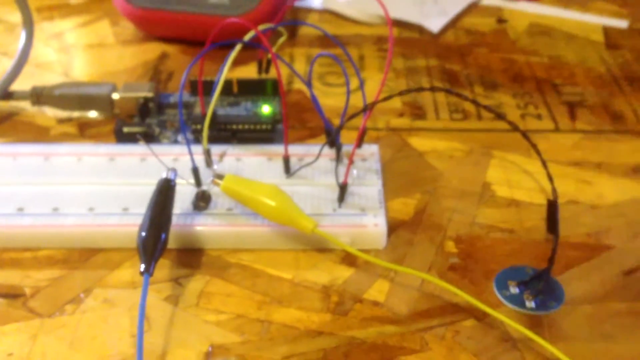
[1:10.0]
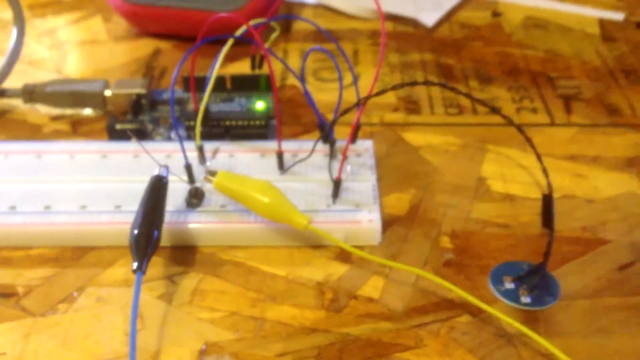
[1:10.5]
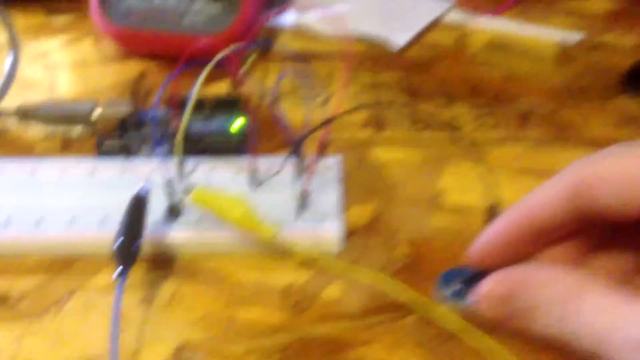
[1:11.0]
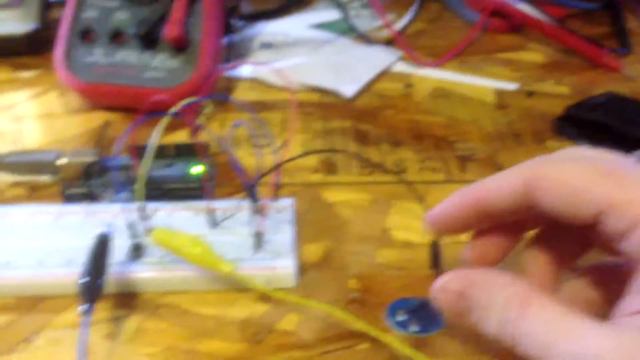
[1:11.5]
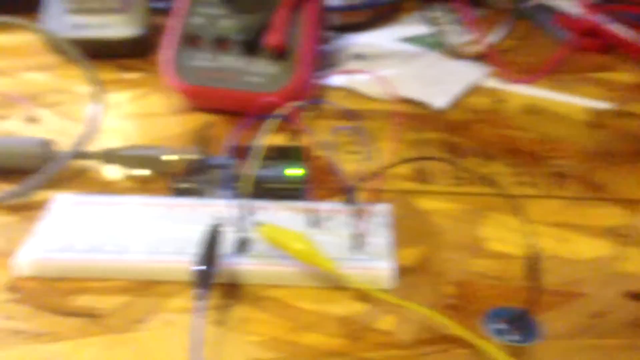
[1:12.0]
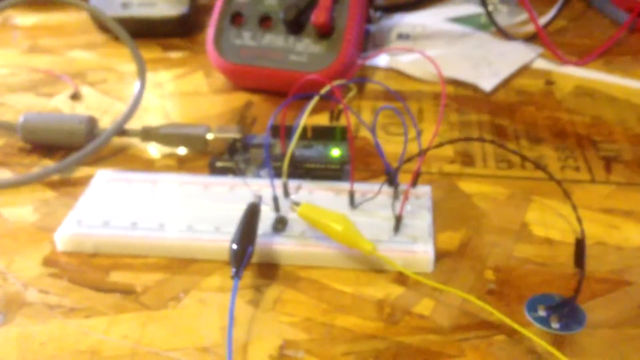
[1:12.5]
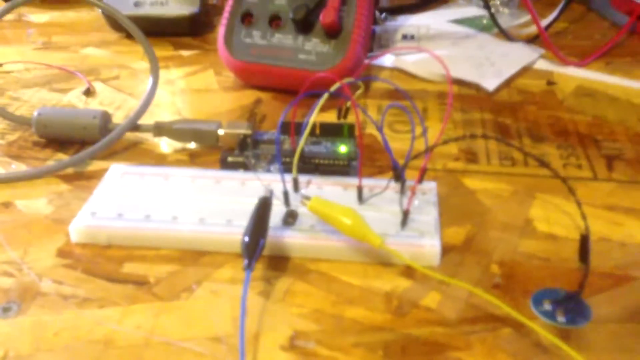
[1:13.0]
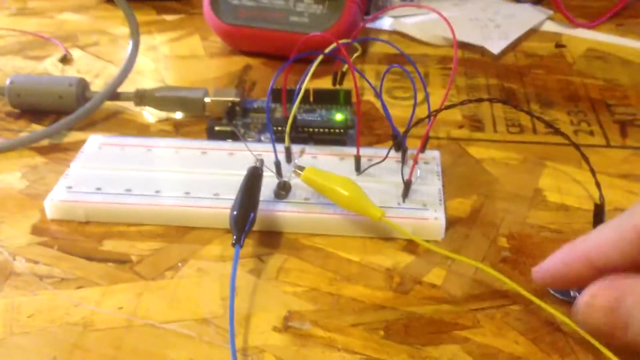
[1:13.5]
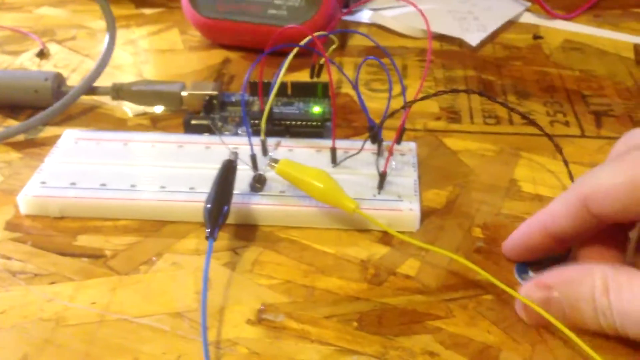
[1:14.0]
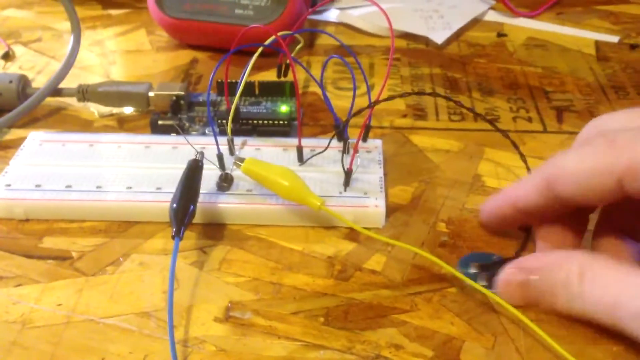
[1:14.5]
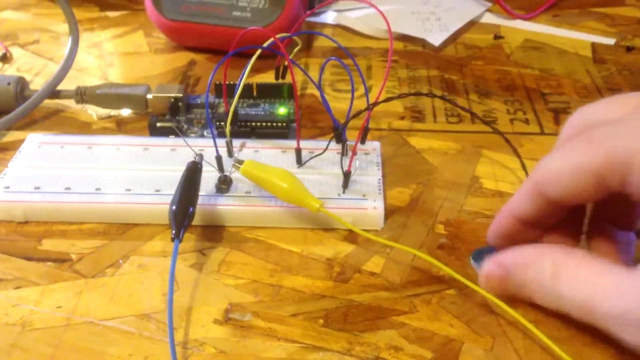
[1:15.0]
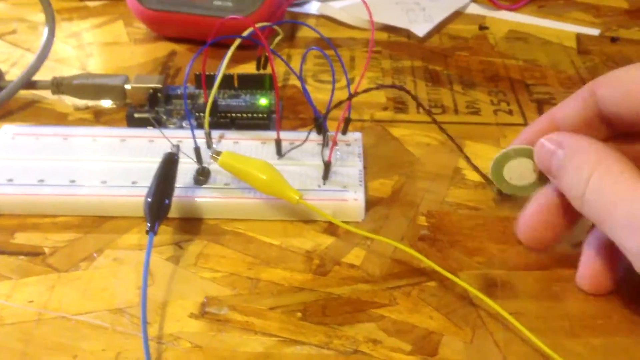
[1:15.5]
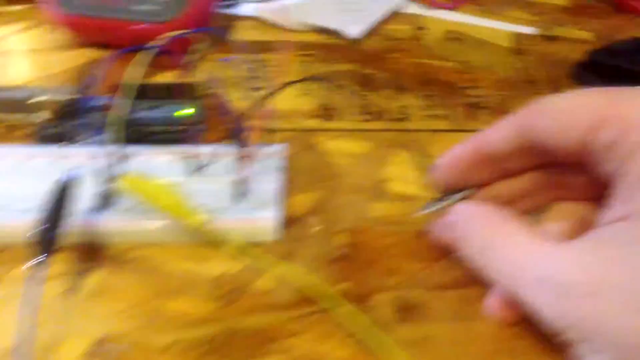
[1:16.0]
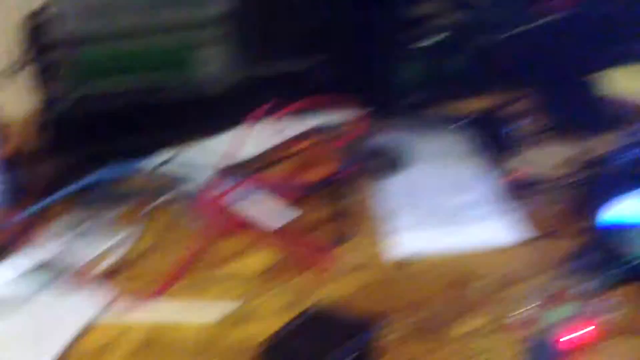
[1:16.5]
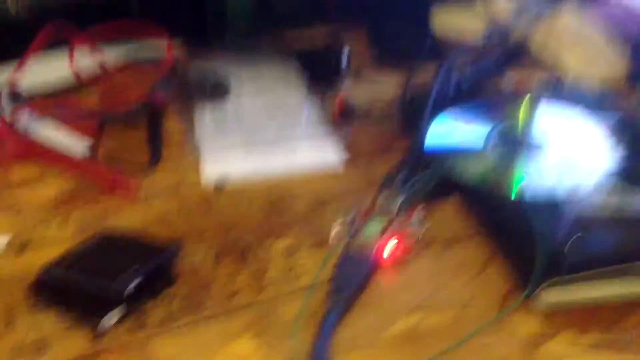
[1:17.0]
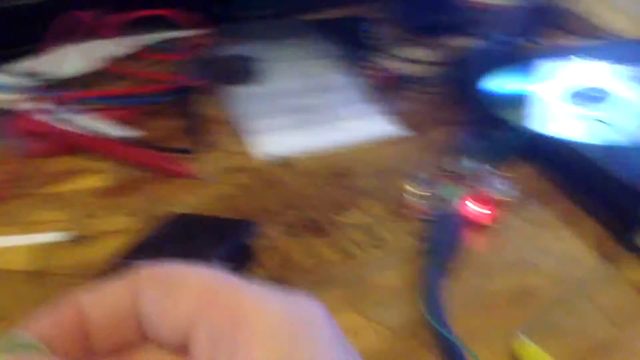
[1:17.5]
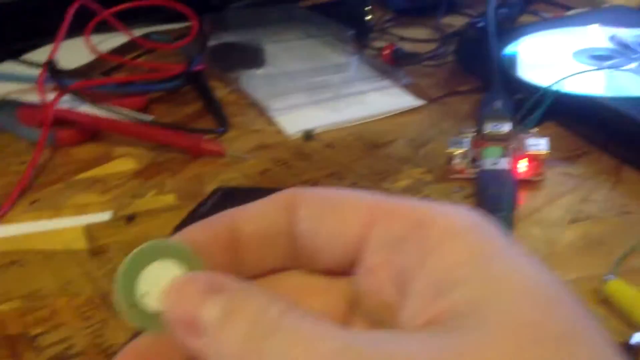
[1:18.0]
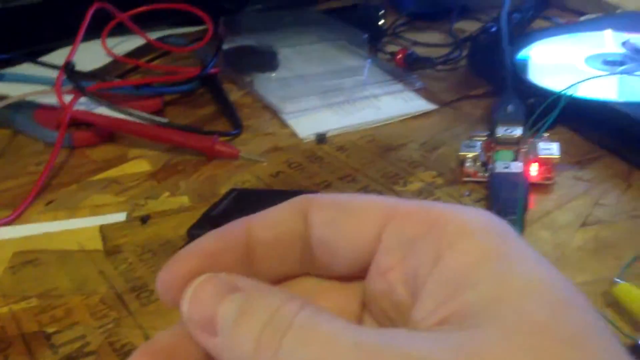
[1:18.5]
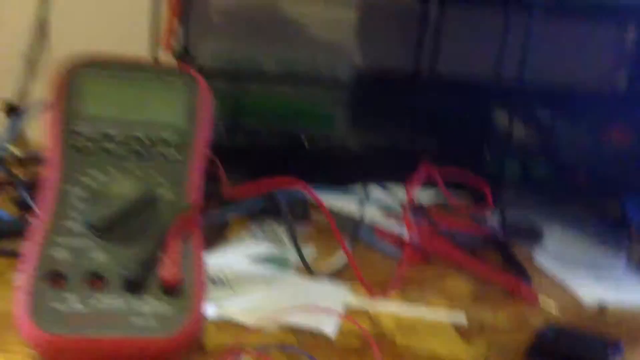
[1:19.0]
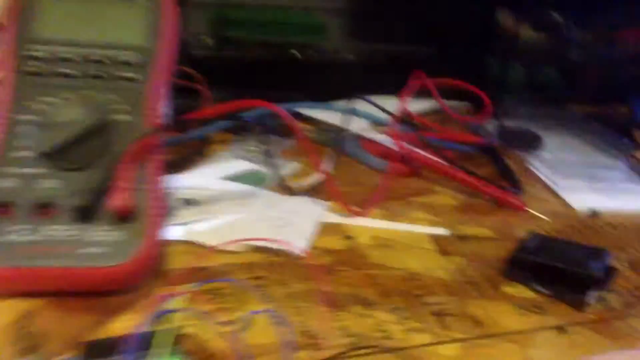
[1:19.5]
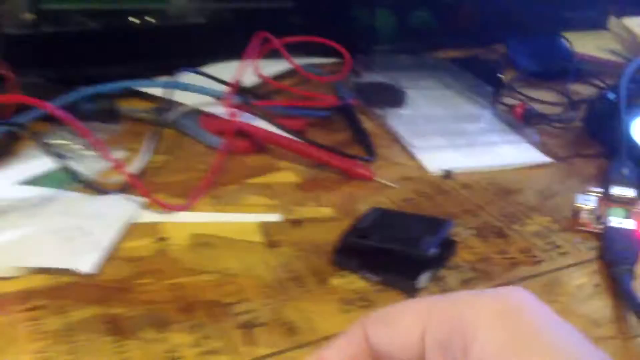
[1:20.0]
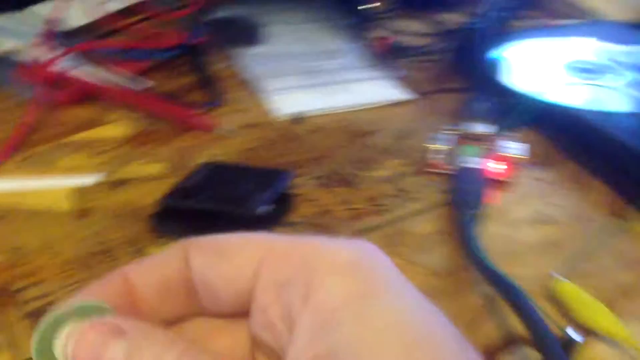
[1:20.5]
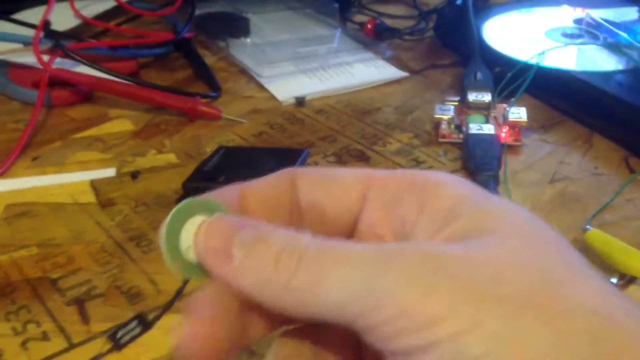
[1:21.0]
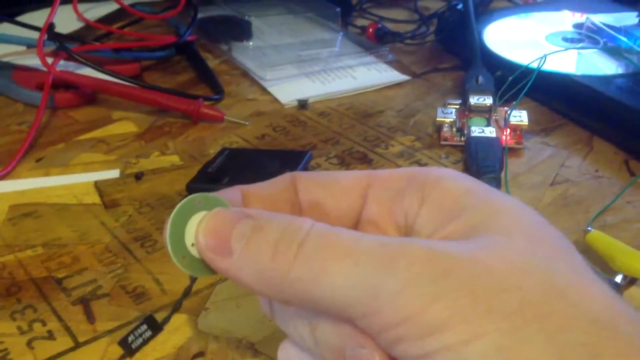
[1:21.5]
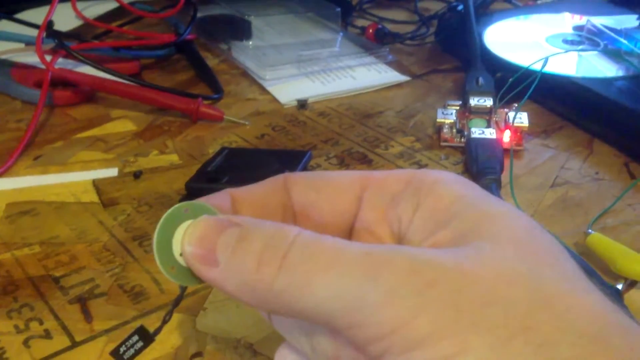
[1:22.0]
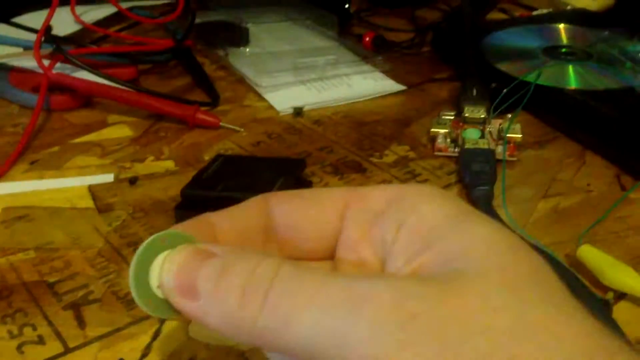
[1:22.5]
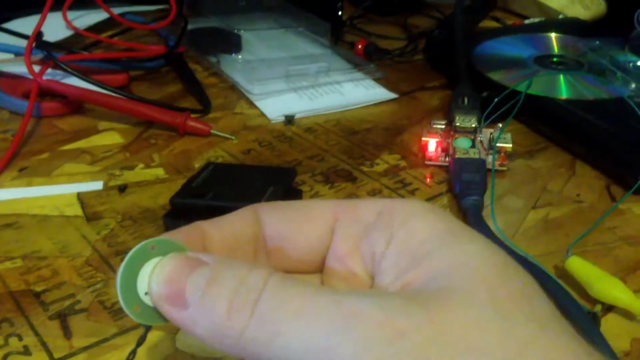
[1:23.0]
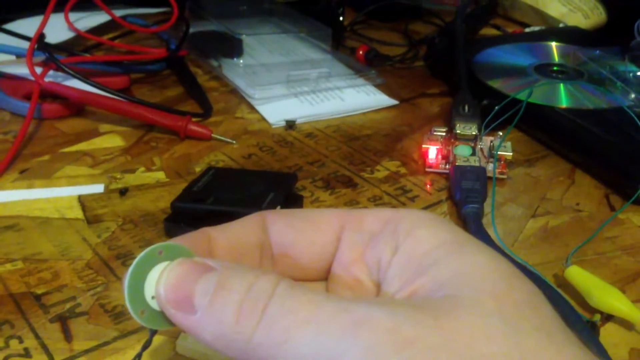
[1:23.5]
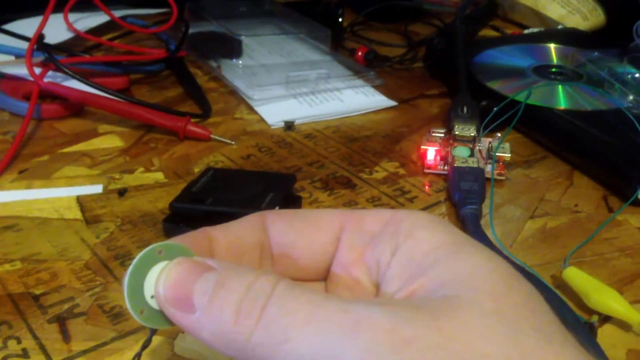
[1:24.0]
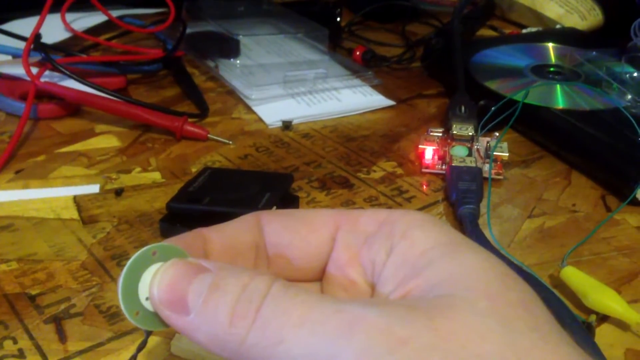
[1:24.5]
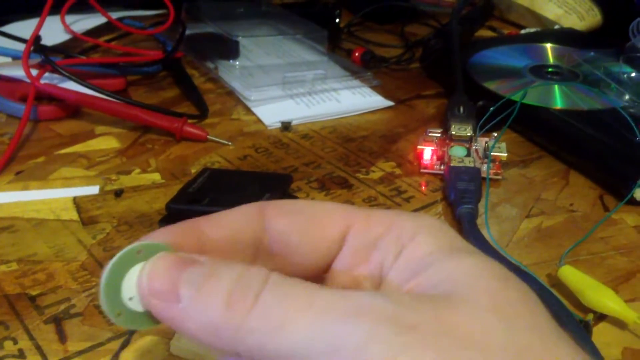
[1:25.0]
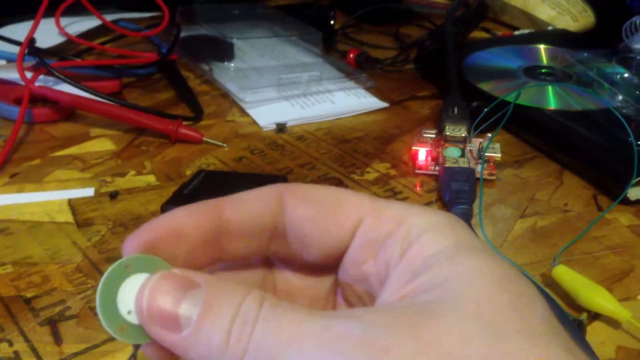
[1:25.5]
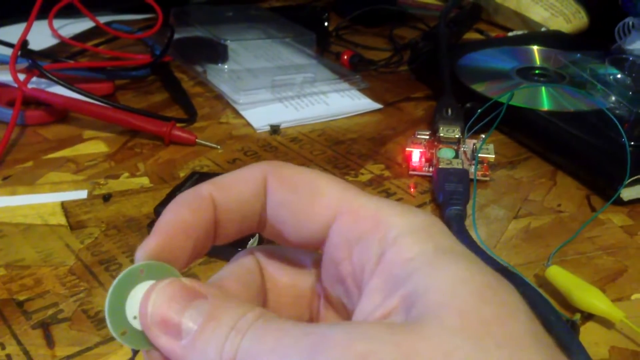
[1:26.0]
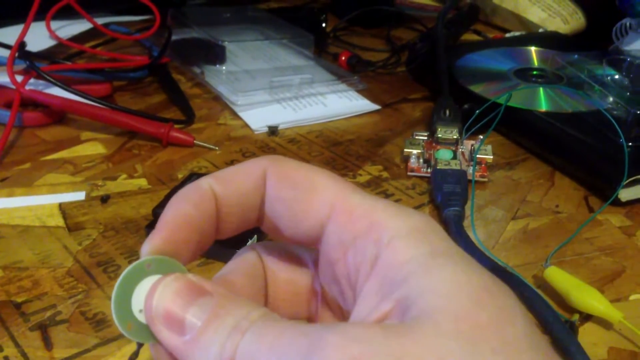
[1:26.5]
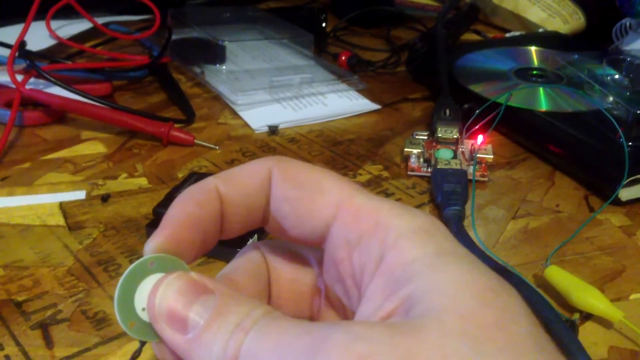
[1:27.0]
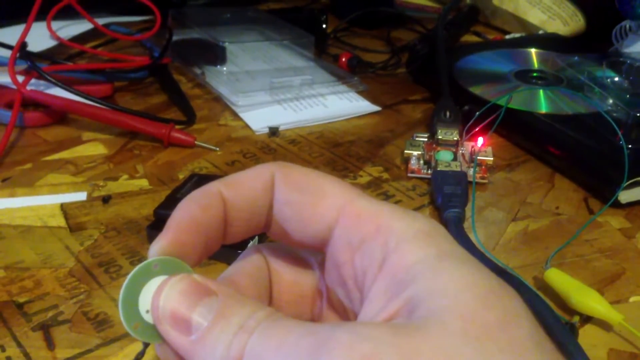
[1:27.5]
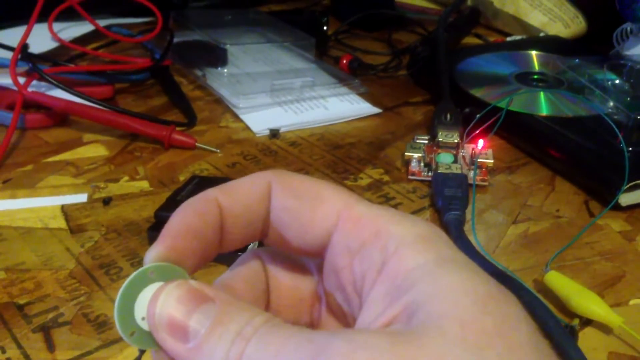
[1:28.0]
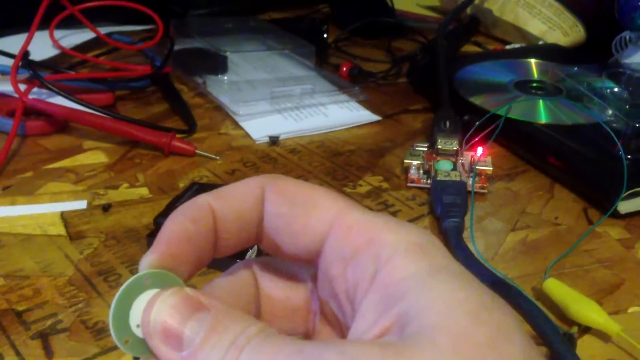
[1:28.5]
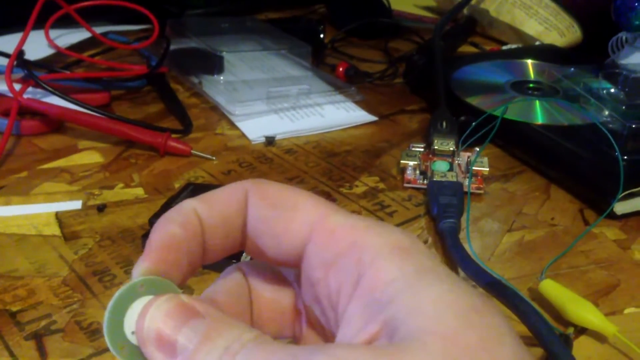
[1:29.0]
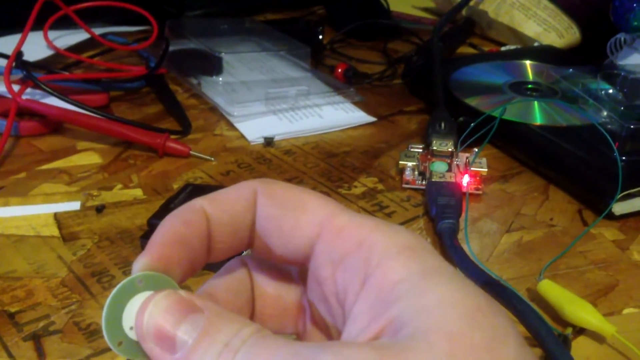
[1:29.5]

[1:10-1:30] A white multi-socket connector on the table has many cables connected to it, looped from one point to another, in yellow, blue and red. A small panel shows a green light and has a USB cable connected to it on the table. A person makes the connections. He has a device like a button, and apparently the light on the panel marked 0 1 2 3 switches from red to green after the button, which is connected to the multi-socket connector, is pressed. There is a flat panel that looks like a switch on it.